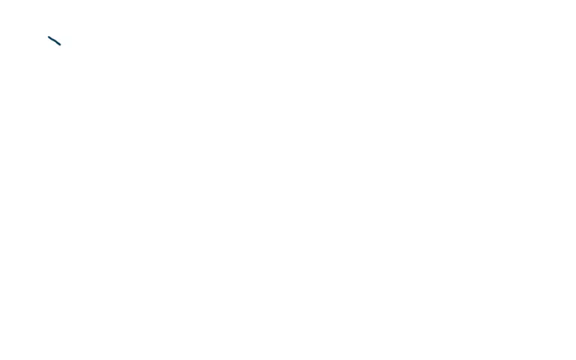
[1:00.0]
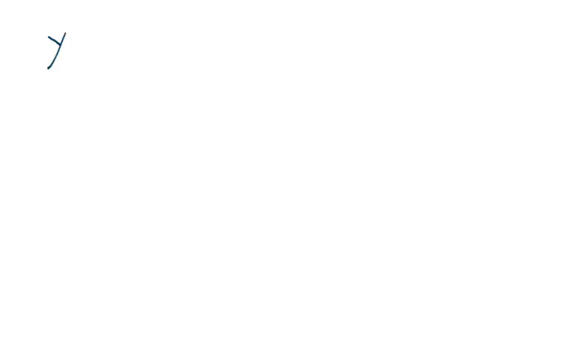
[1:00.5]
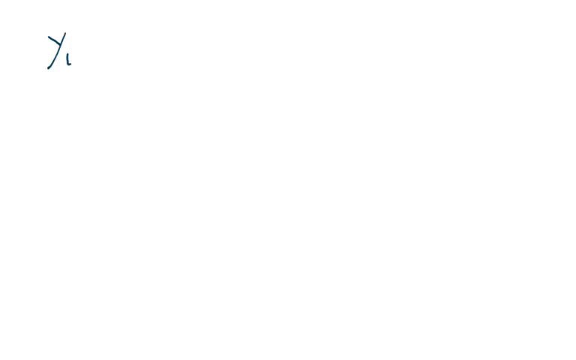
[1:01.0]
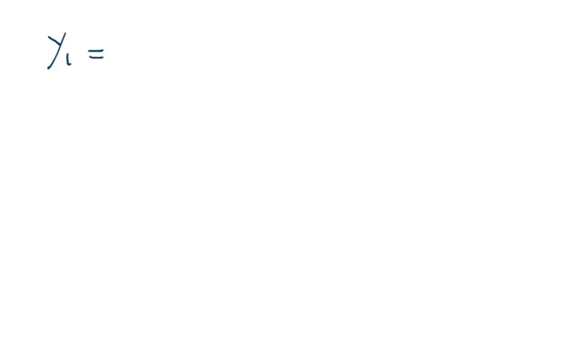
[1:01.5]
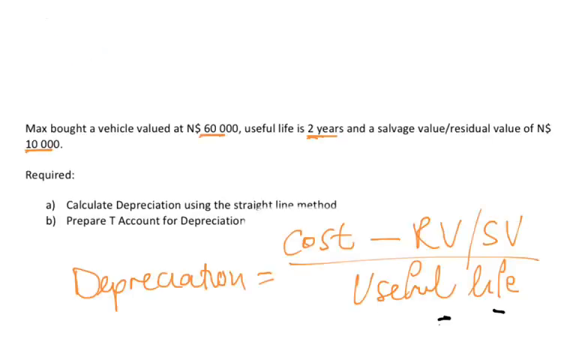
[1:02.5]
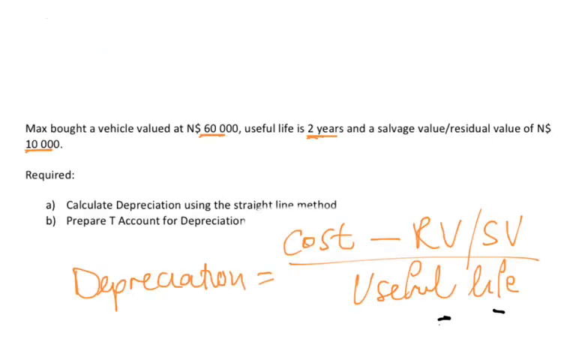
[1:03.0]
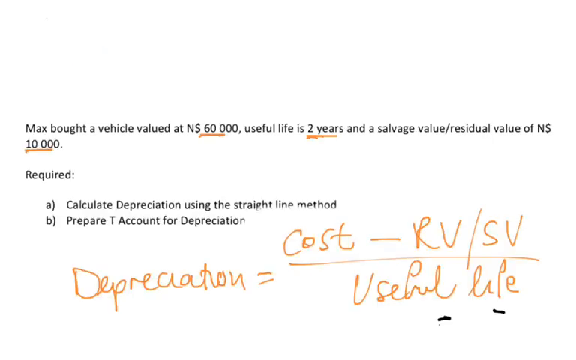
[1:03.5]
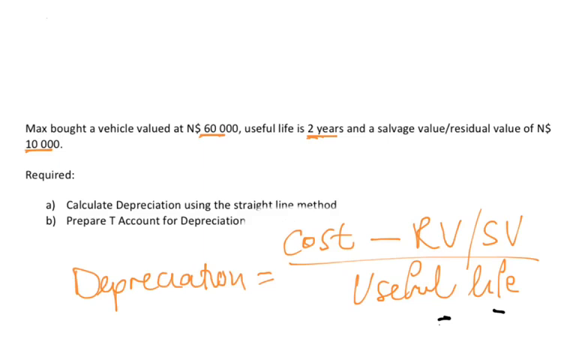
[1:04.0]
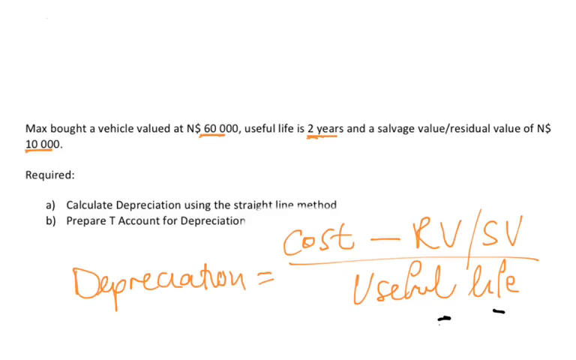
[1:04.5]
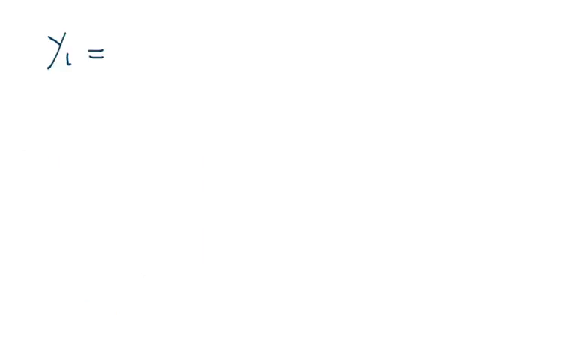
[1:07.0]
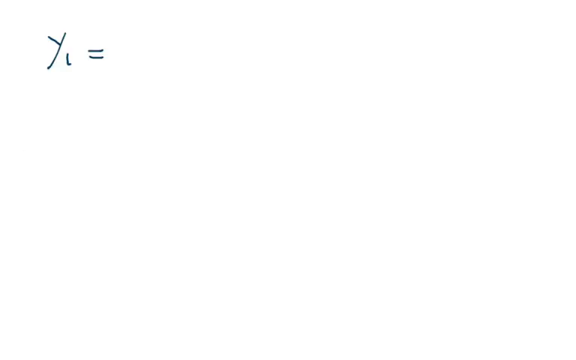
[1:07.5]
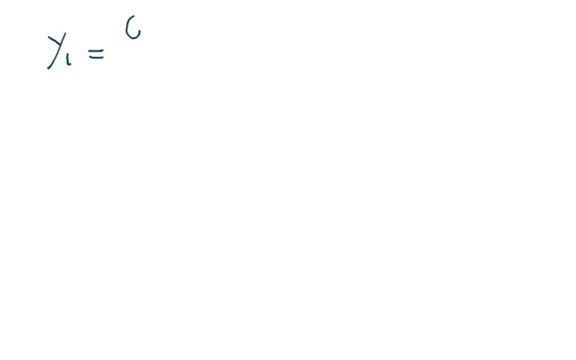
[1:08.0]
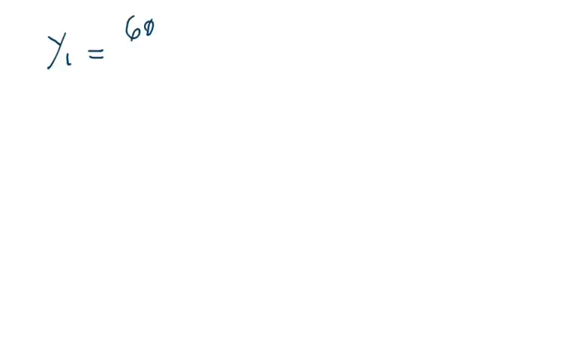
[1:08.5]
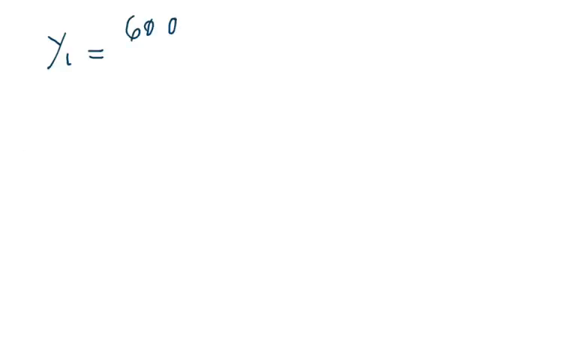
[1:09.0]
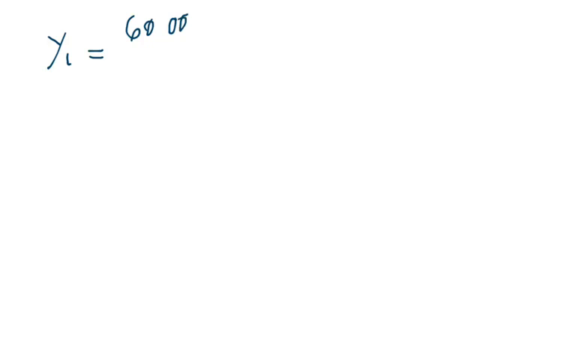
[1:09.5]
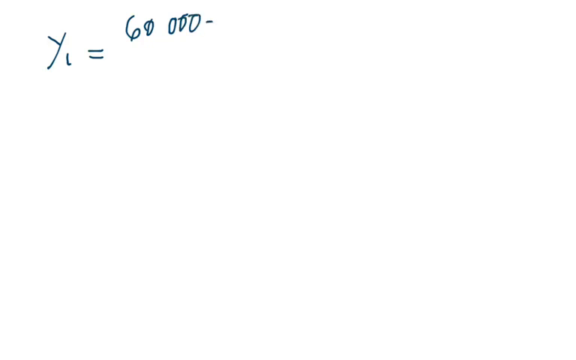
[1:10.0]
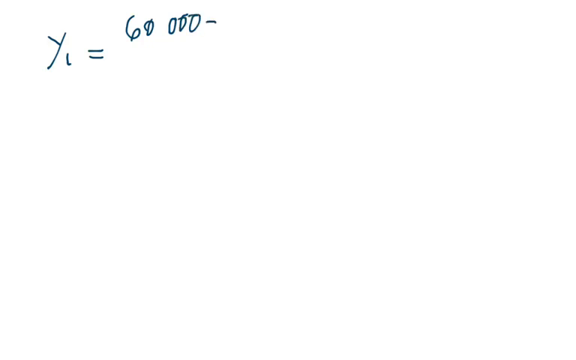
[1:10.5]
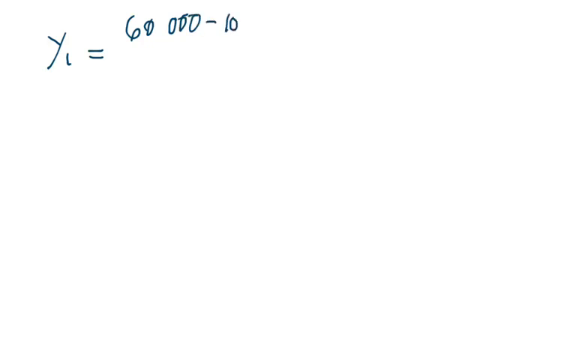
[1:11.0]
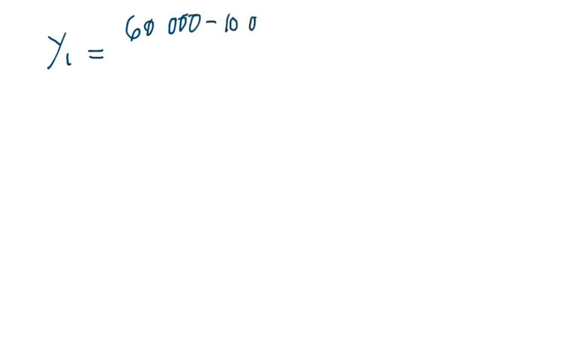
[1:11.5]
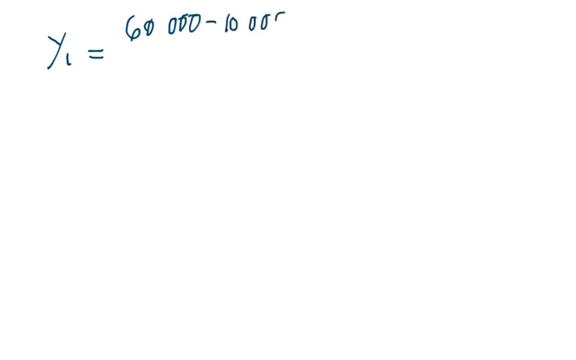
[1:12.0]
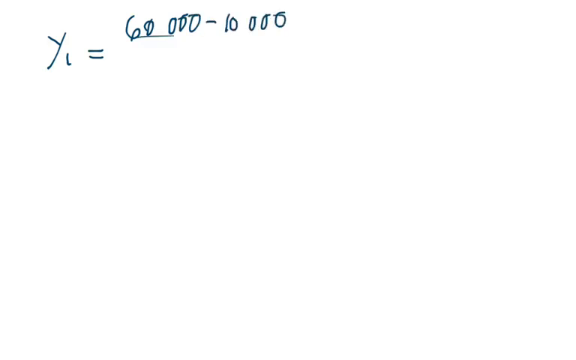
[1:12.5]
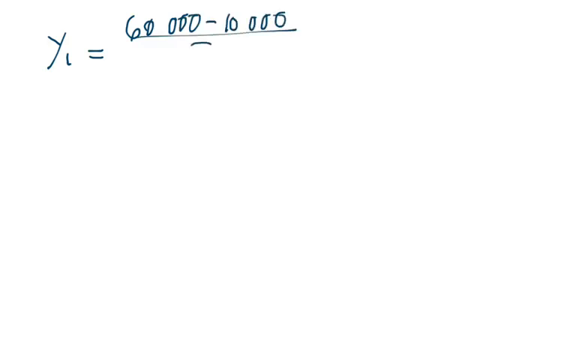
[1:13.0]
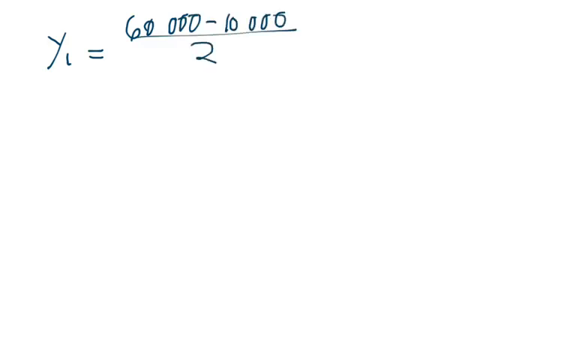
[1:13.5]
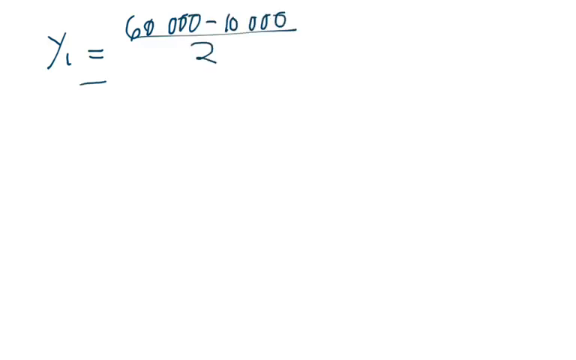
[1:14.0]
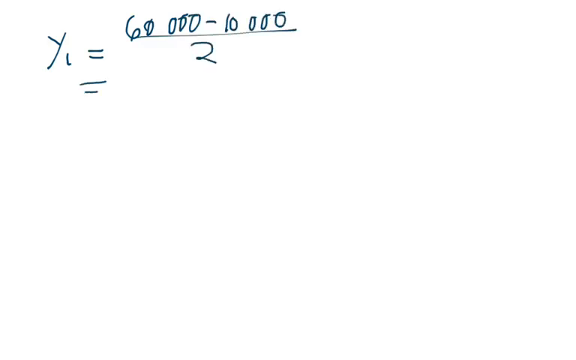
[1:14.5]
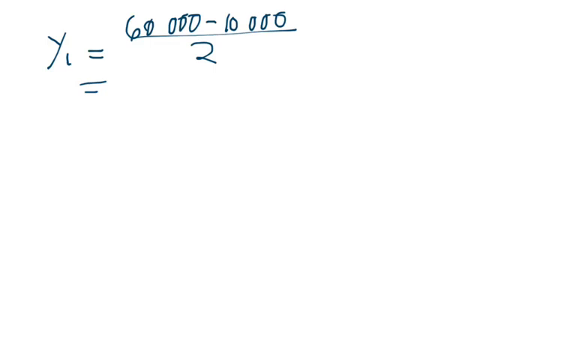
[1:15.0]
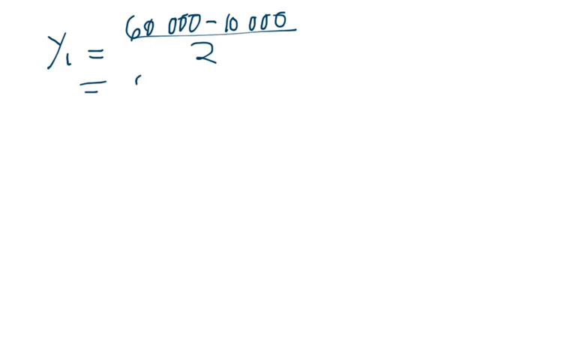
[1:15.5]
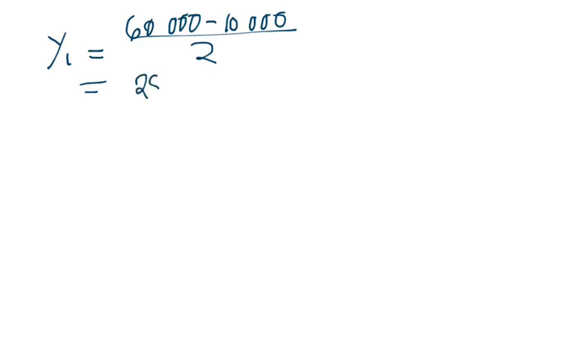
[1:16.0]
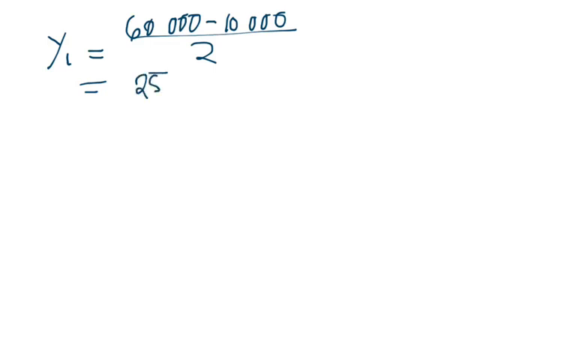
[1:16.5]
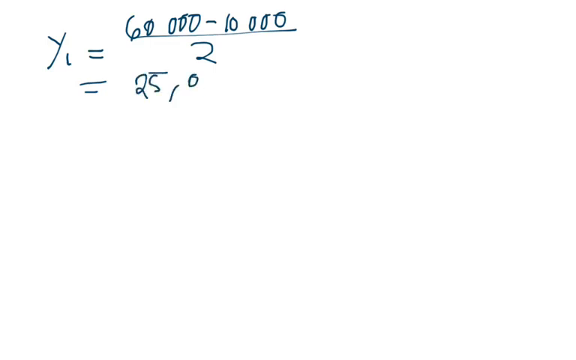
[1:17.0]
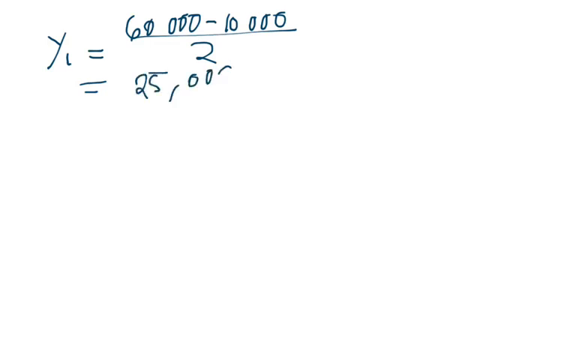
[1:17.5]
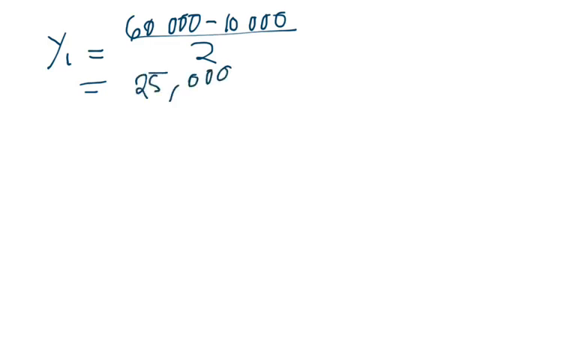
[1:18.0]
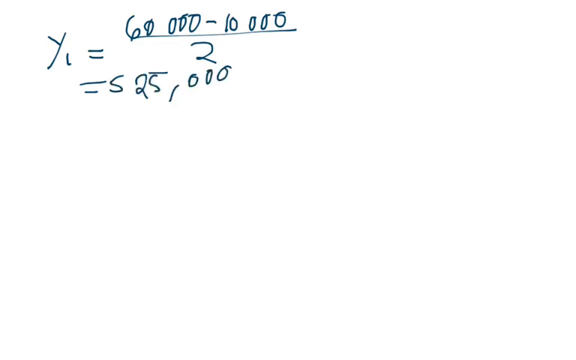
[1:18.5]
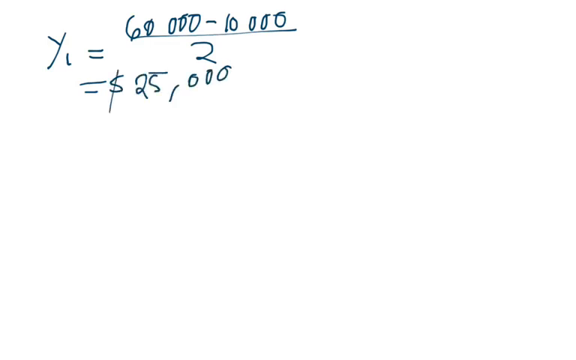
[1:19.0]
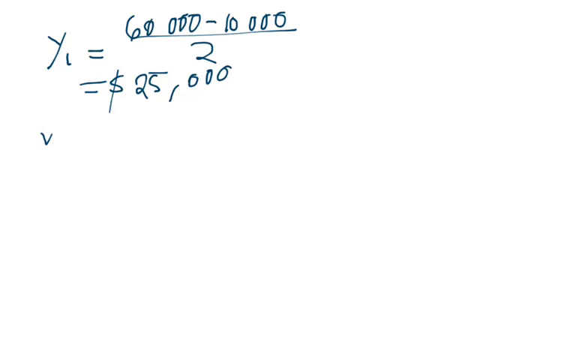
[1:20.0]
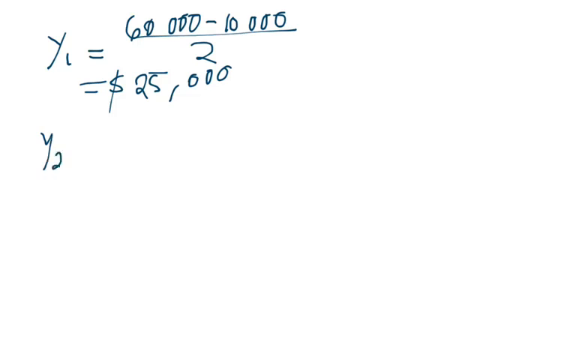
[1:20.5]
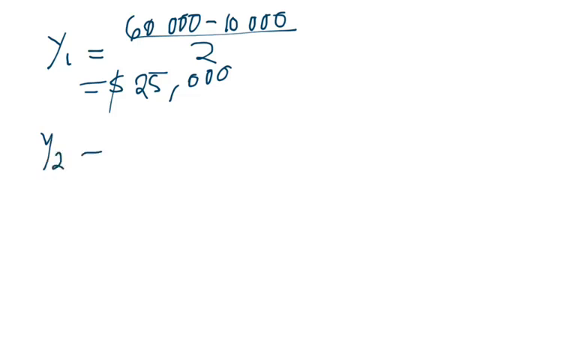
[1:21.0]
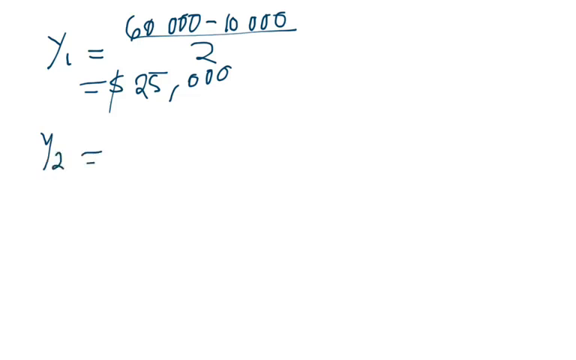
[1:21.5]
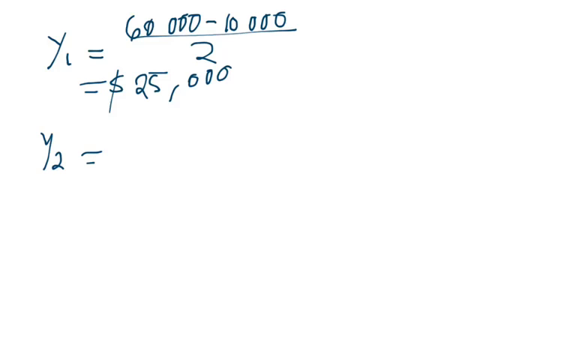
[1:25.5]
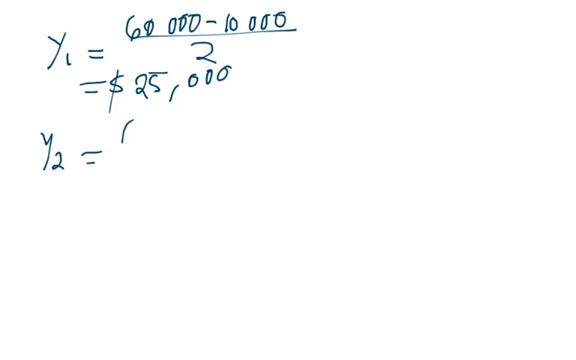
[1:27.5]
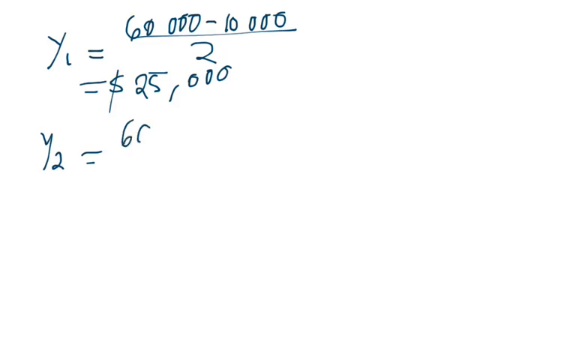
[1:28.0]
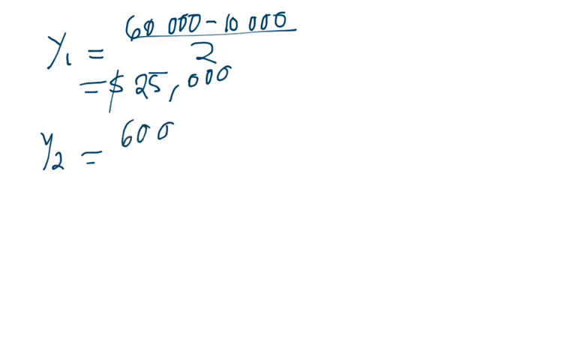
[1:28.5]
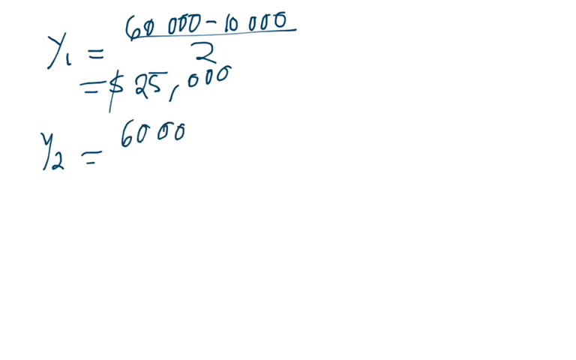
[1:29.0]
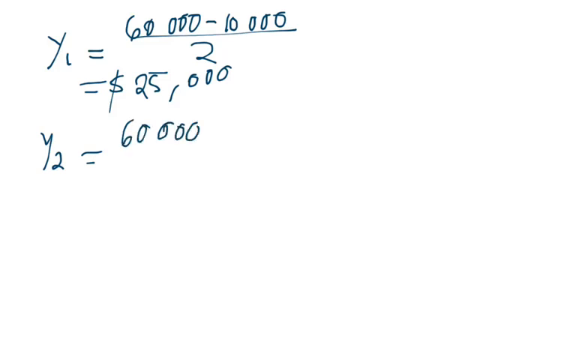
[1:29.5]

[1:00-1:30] A completely white blank screen shows only one green line going diagonally to the right. A calculation is slowly written out: "y1 =". The scene then transitions back to the slide with the word problem, which says "Max bought a vehicle valued at N$60,000, useful life is two years and a salvage value/residual value of N$10,000." Below that it says "required:", then "a)" and "calculate depreciation using the straight line method", with "straight line method" slightly faded out. Below that it says "b) prepare t account for depreciation", with the n at the end of the sentence slightly faded. Below that is a sloppily written calculation in orange ink: "depreciation = cost - rv/sb over useful sale". The scene then transitions back and the calculation is finished being written out.